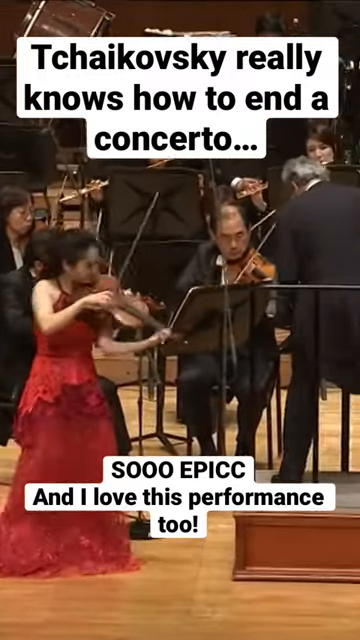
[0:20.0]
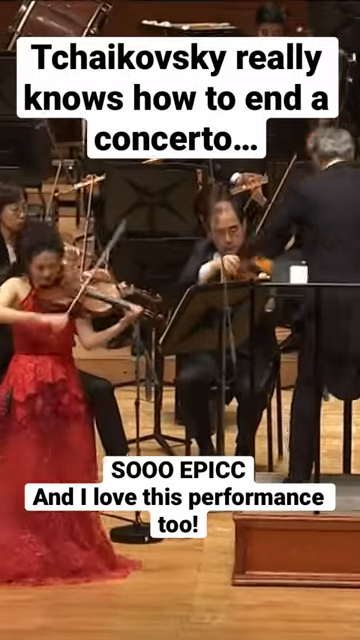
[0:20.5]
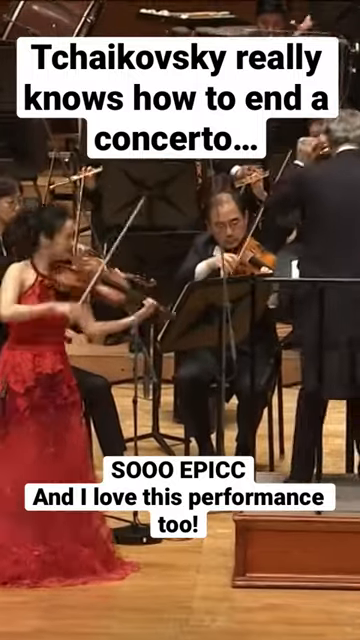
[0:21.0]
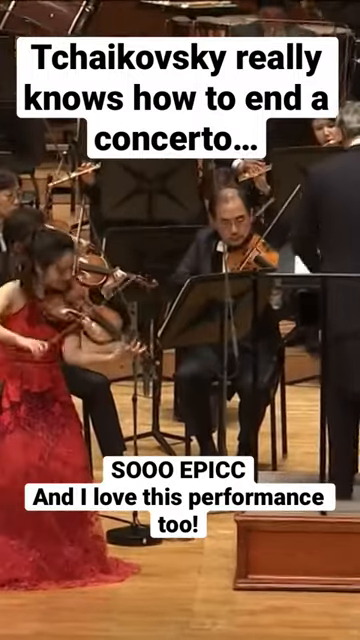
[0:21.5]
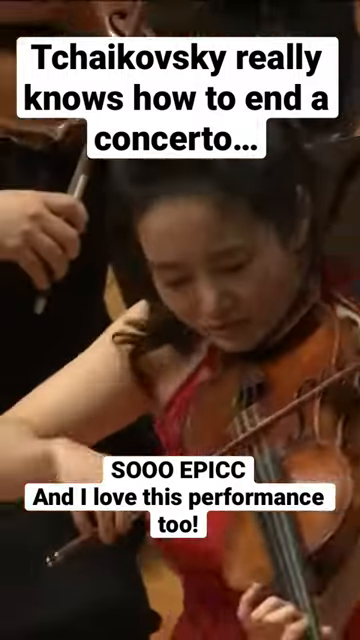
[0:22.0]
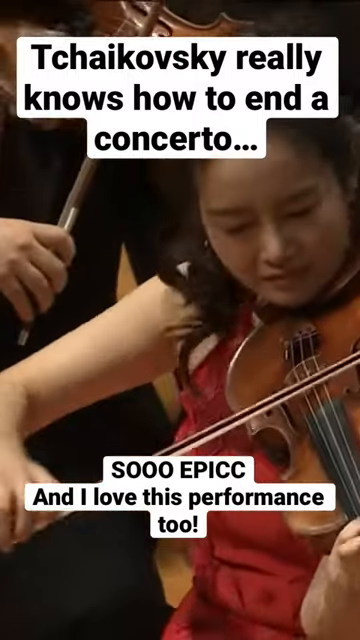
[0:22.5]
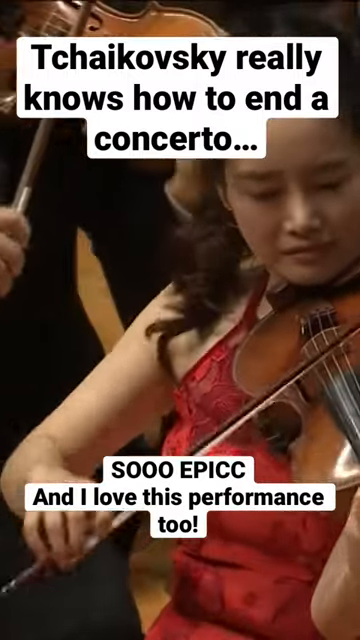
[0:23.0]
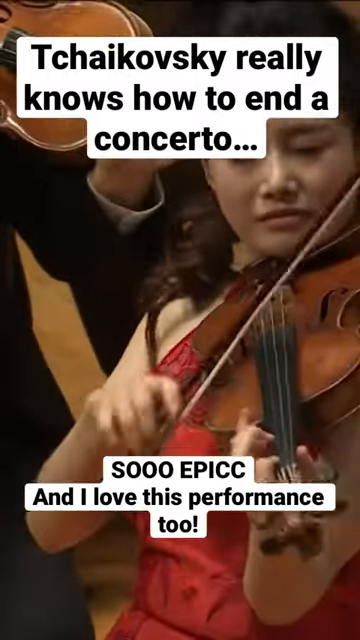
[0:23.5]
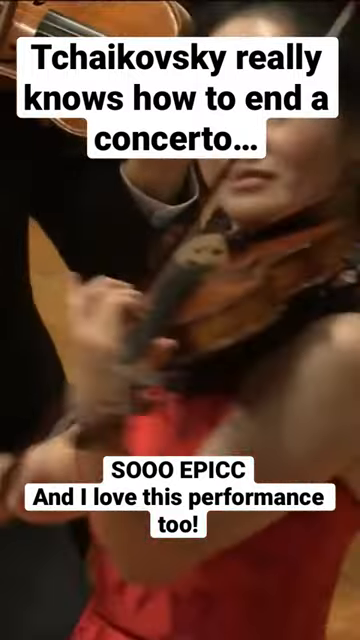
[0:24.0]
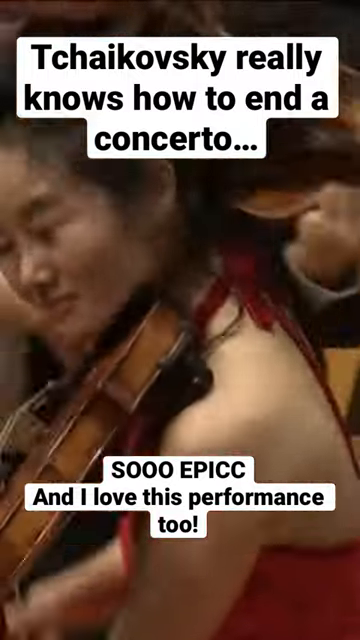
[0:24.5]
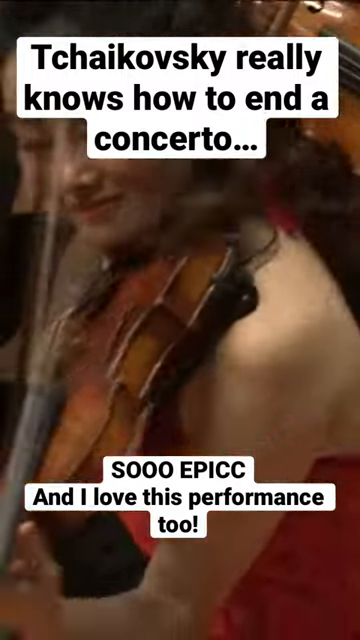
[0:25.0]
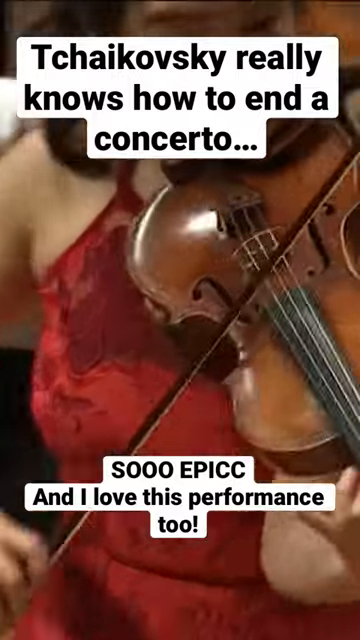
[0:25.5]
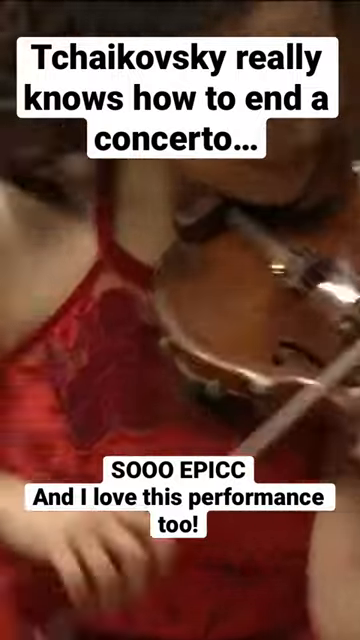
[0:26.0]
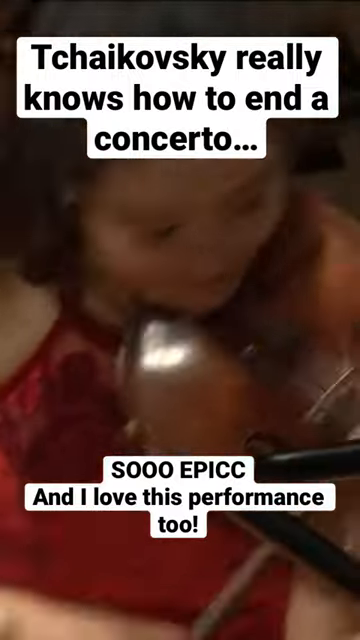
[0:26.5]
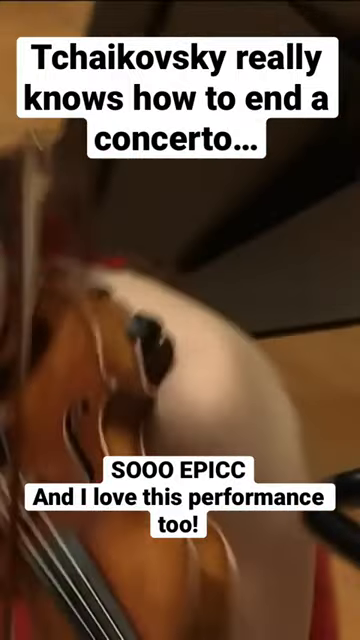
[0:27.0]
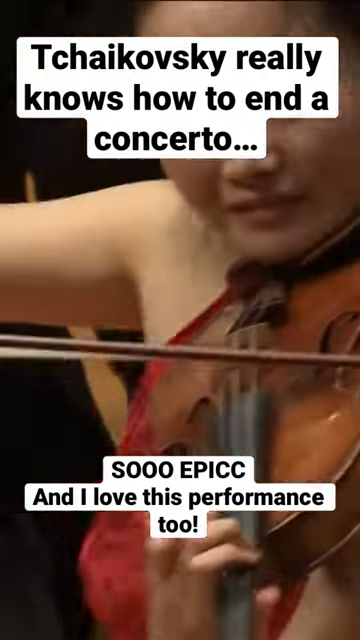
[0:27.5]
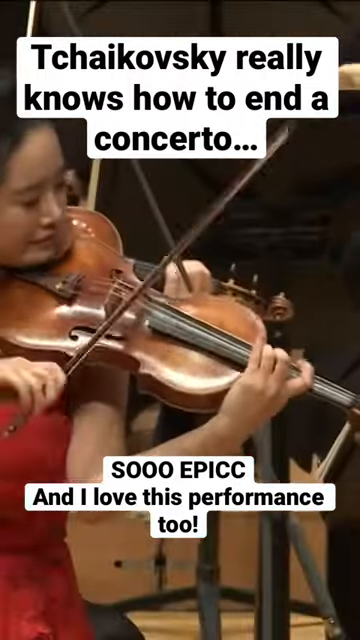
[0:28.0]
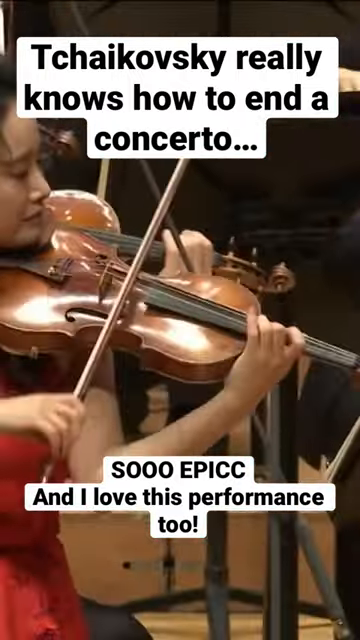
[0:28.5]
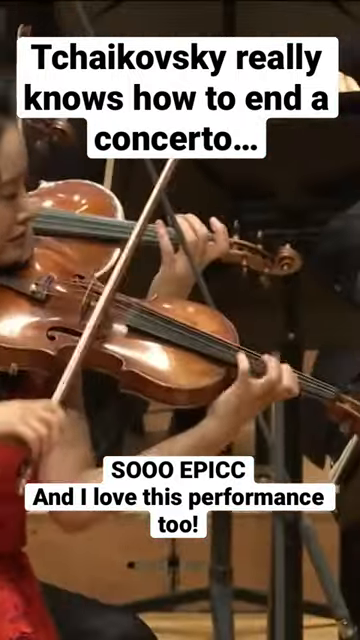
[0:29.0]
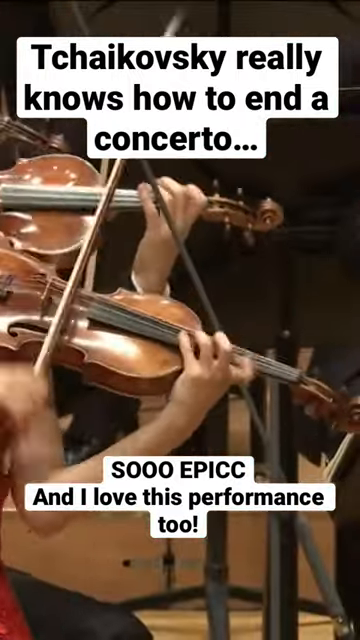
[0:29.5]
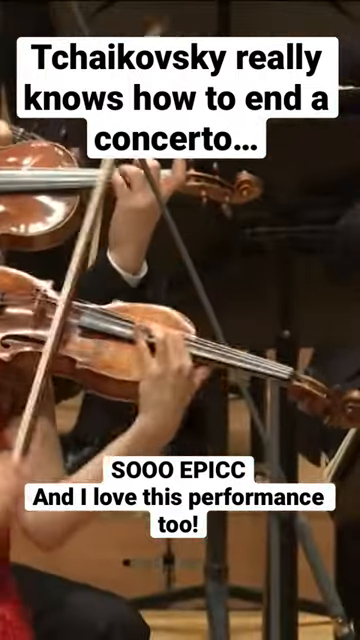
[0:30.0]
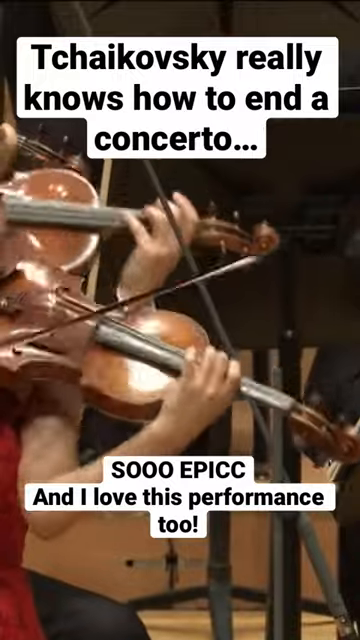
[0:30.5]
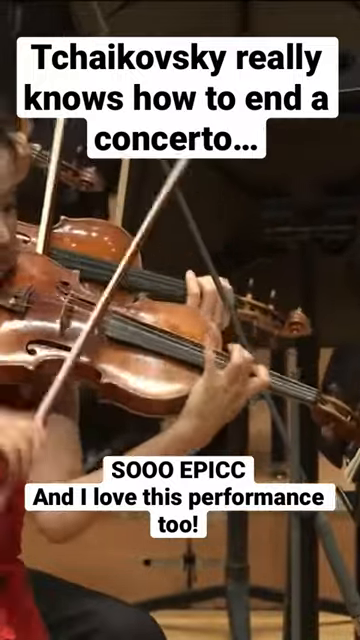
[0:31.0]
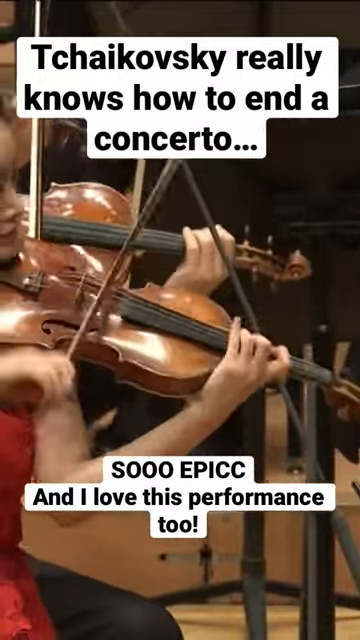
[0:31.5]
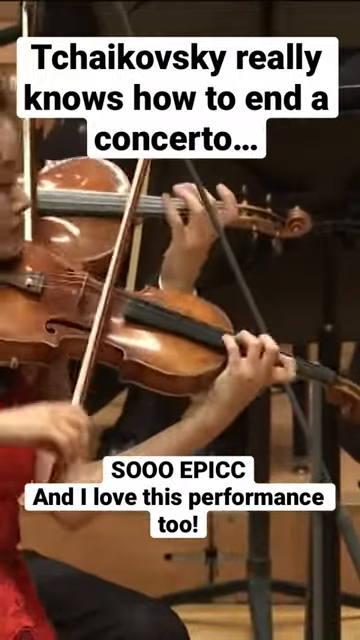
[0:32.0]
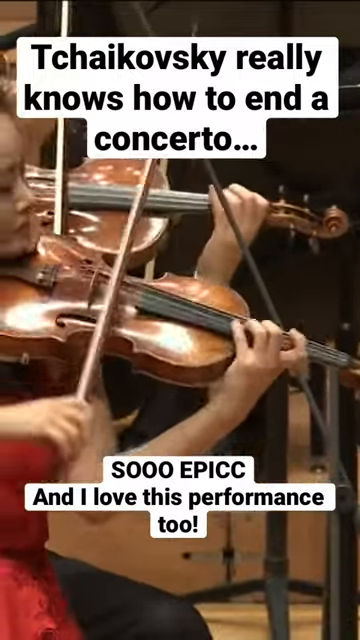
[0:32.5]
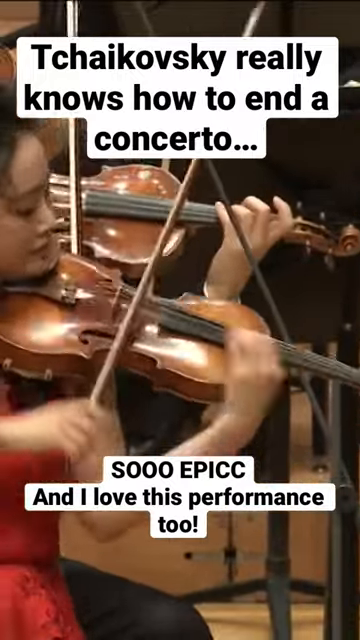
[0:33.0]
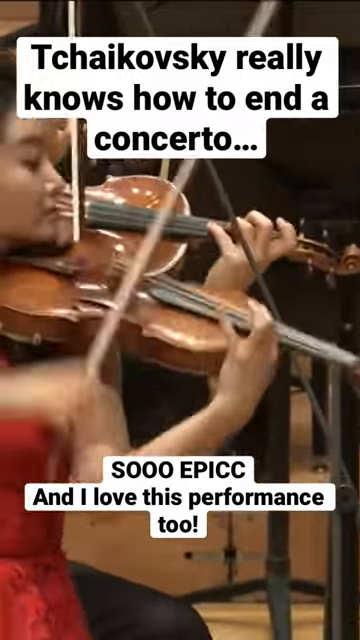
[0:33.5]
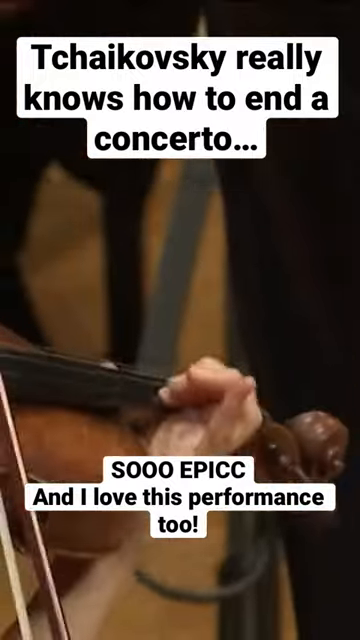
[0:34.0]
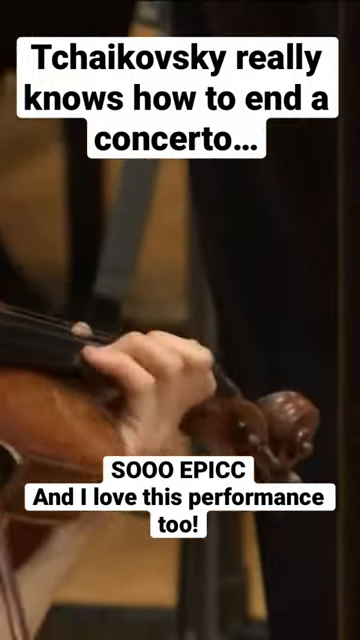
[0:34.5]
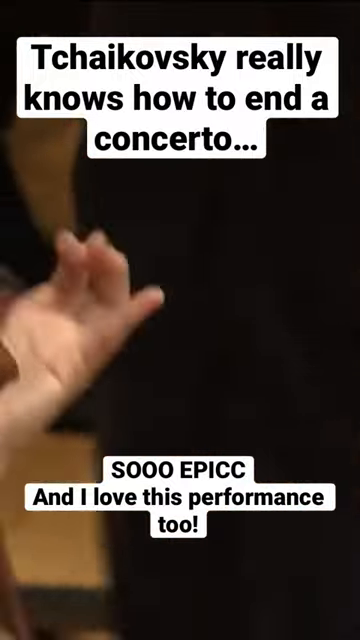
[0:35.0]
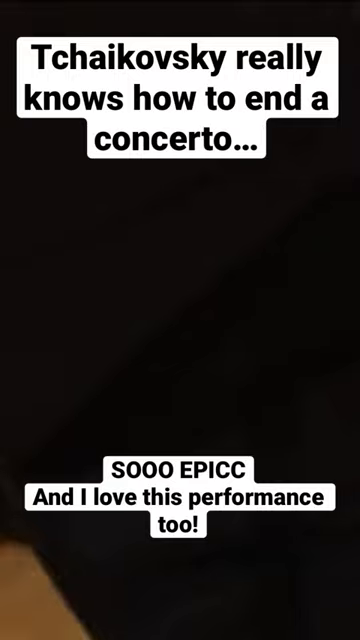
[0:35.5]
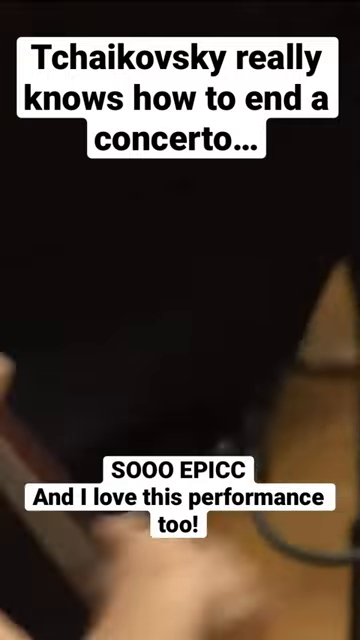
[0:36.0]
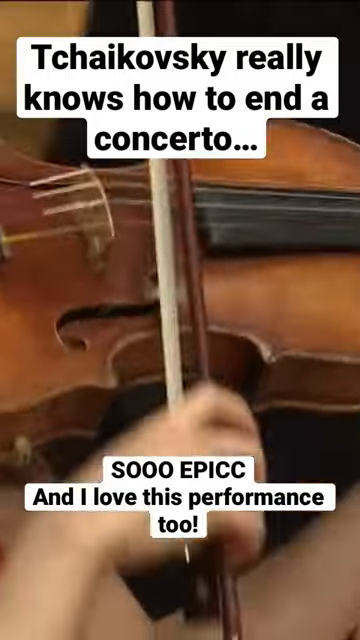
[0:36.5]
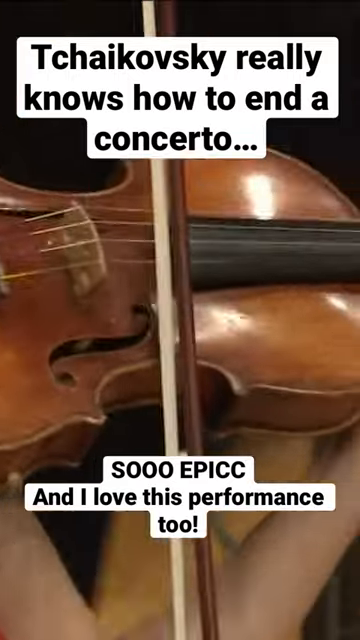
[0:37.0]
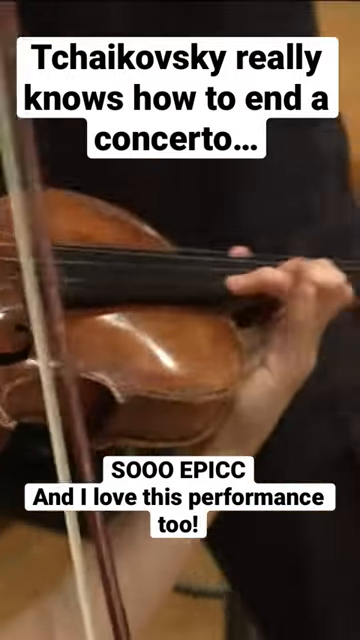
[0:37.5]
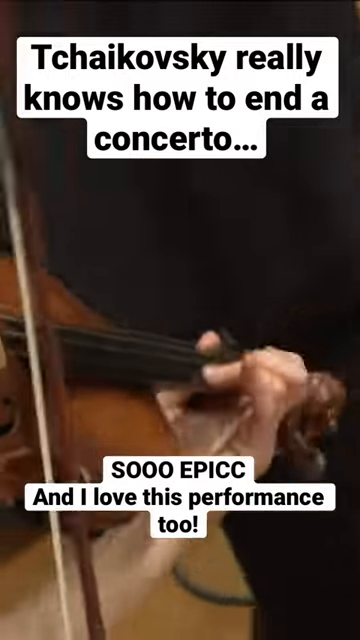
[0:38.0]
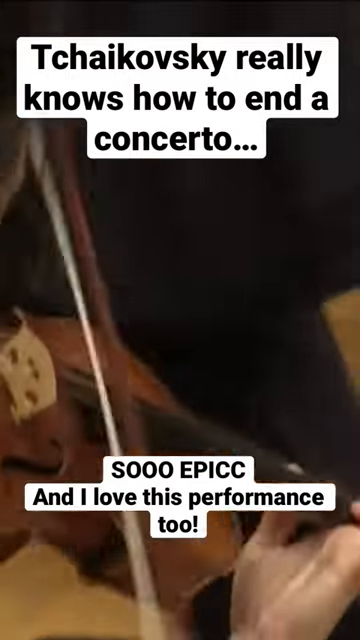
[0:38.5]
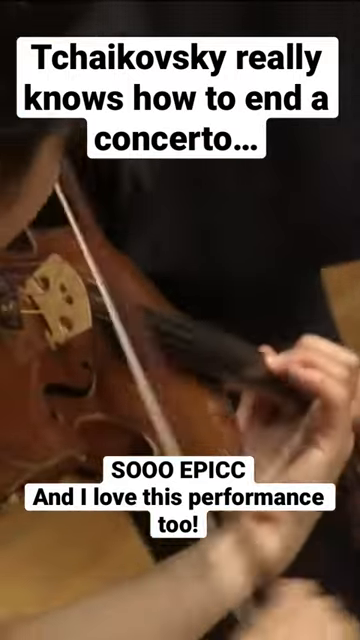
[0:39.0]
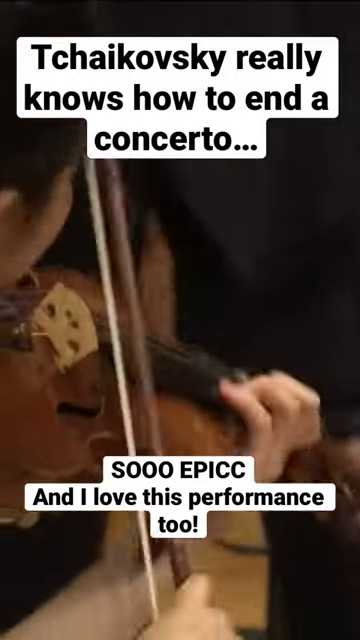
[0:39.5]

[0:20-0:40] The footage continues with what looks like a Japanese girl in a red dress playing a violin furiously, this time in close-up. A couple of violin players appear much closer up, and they seem to be playing extremely fast. Mostly only a couple of the violin players are visible, then the camera pans out to show a larger portion of the orchestra, including the orchestra leader, apparently the conductor.